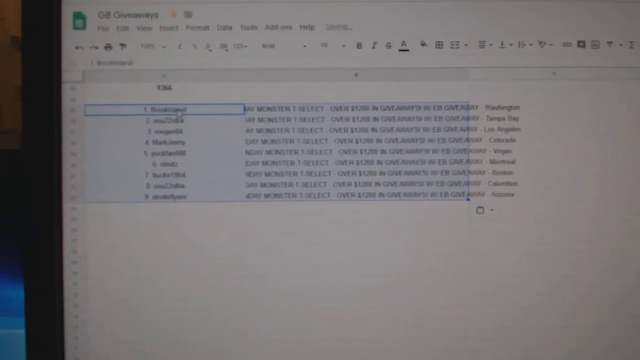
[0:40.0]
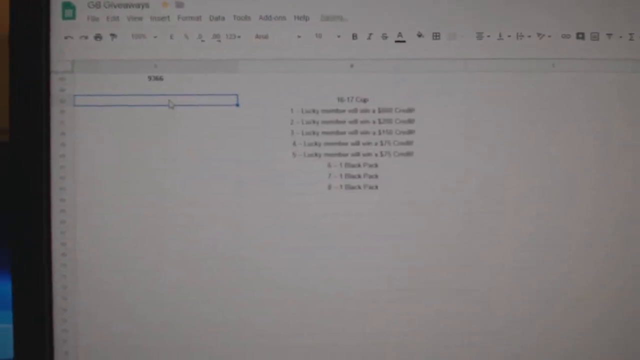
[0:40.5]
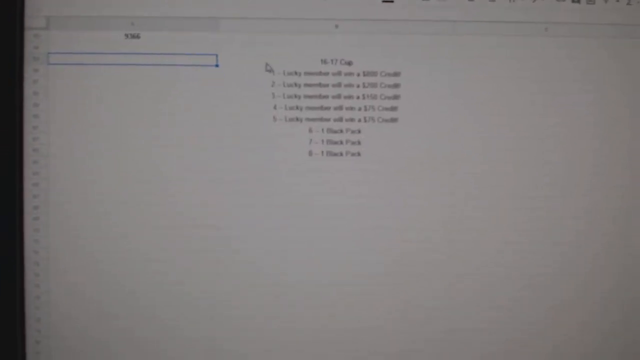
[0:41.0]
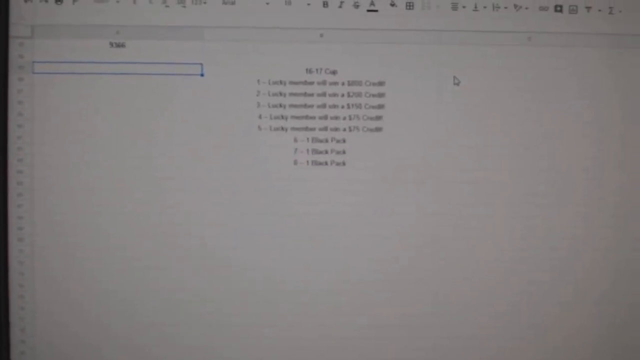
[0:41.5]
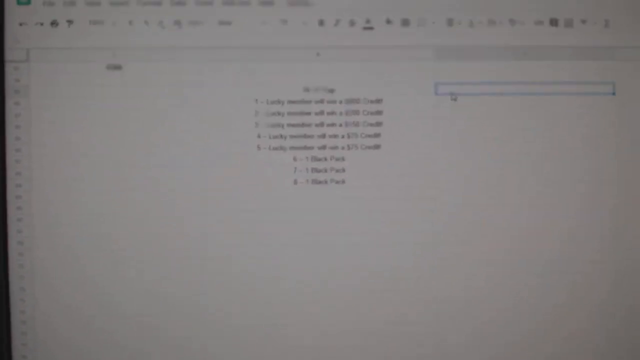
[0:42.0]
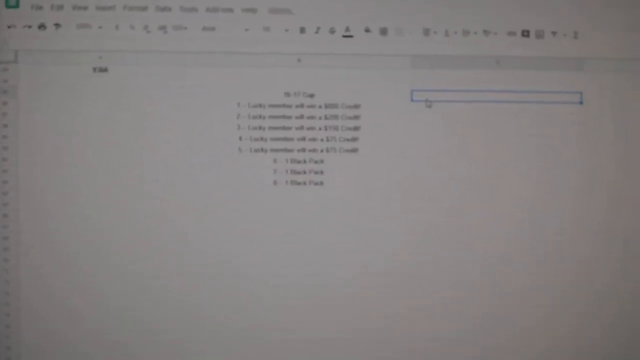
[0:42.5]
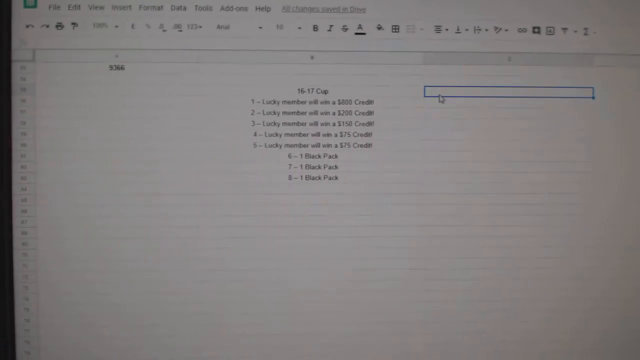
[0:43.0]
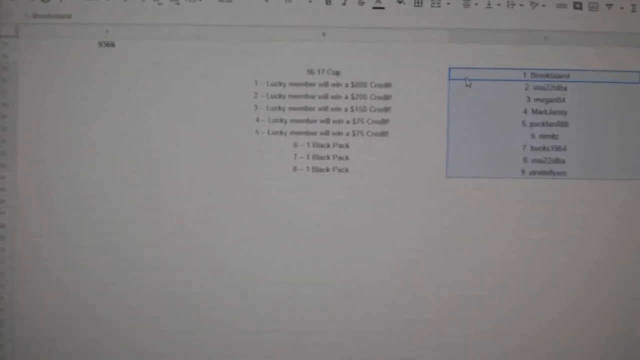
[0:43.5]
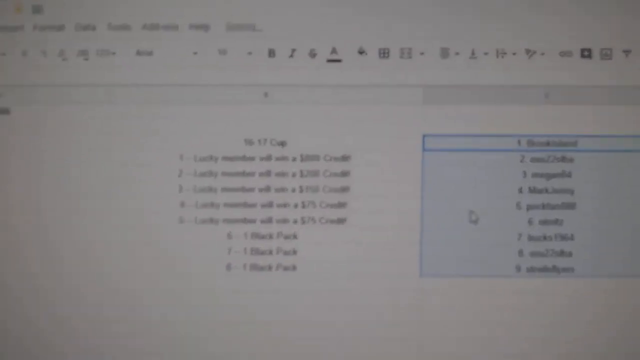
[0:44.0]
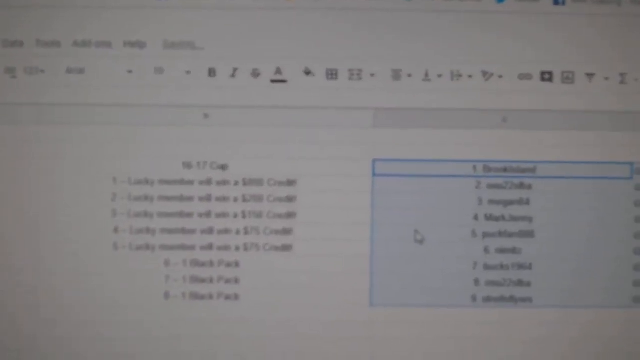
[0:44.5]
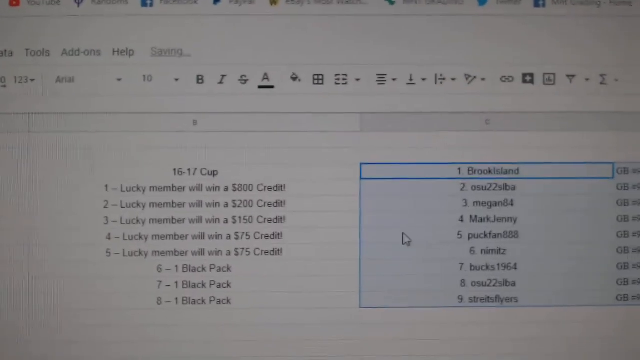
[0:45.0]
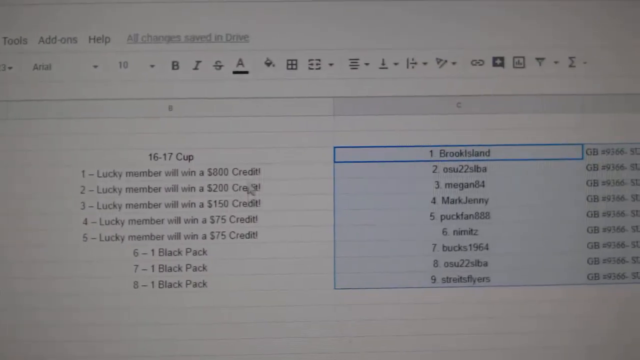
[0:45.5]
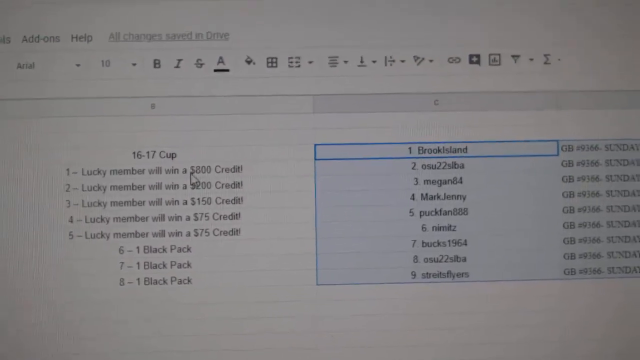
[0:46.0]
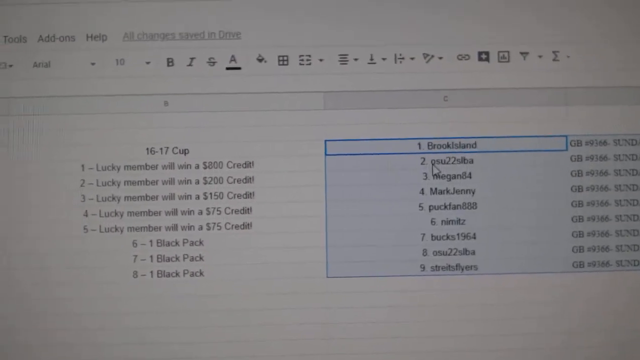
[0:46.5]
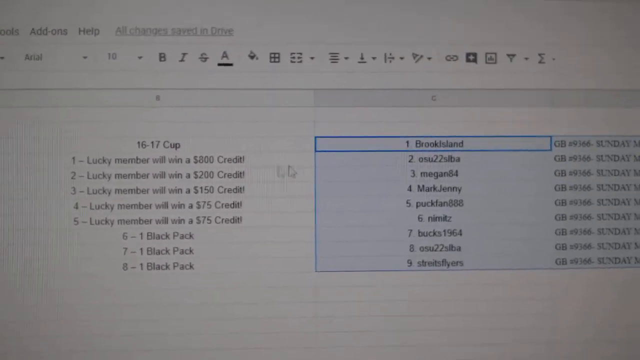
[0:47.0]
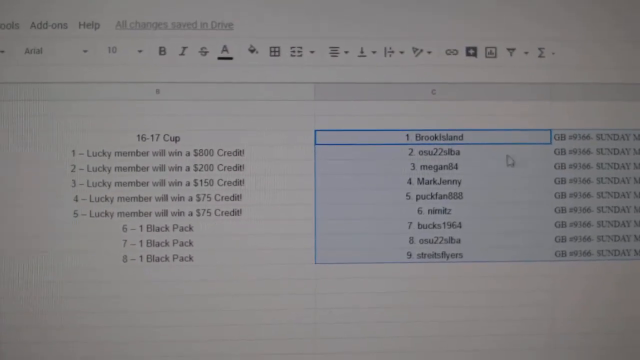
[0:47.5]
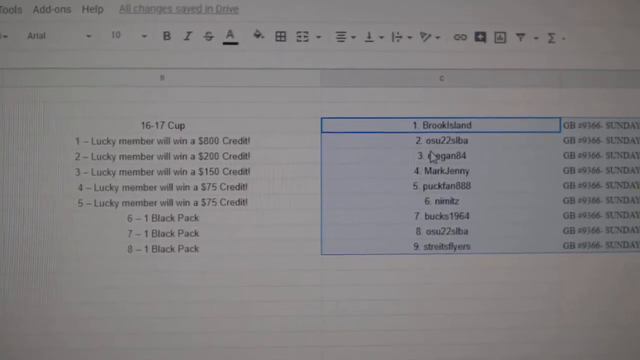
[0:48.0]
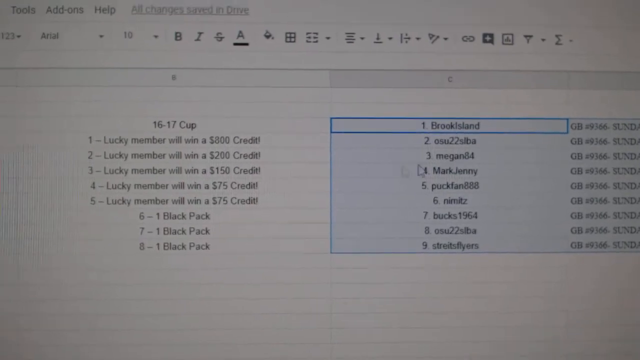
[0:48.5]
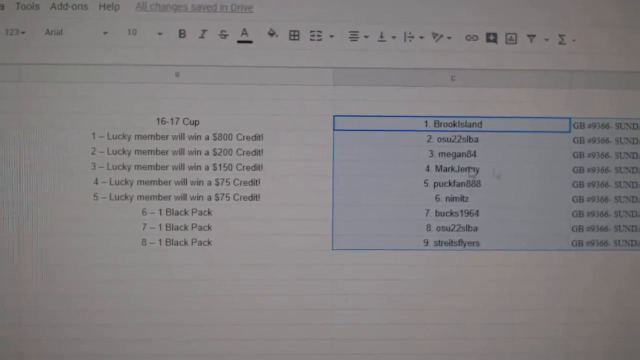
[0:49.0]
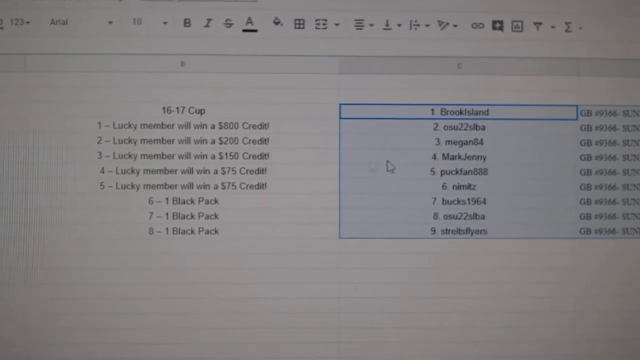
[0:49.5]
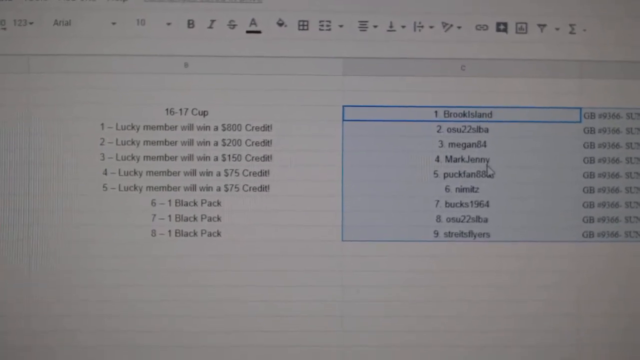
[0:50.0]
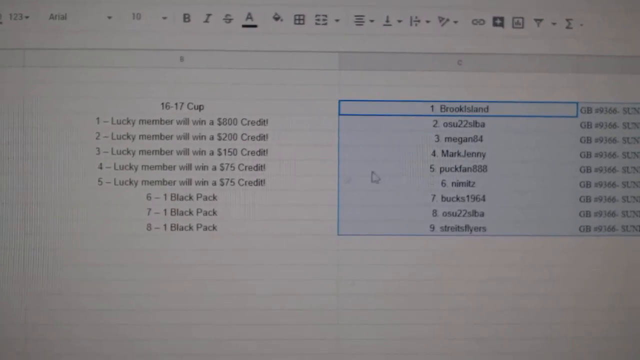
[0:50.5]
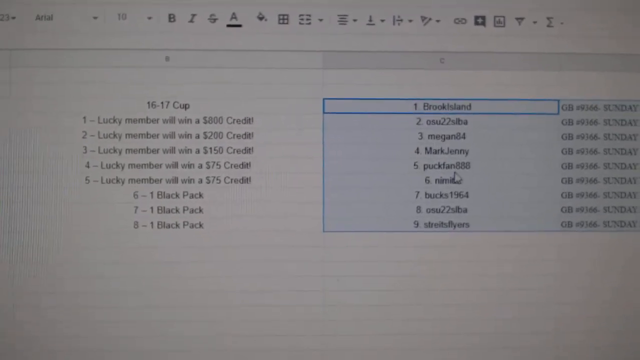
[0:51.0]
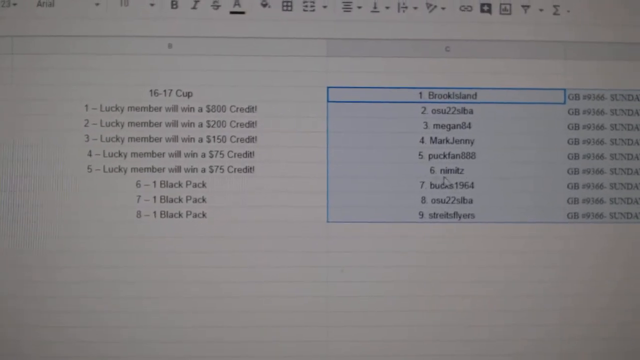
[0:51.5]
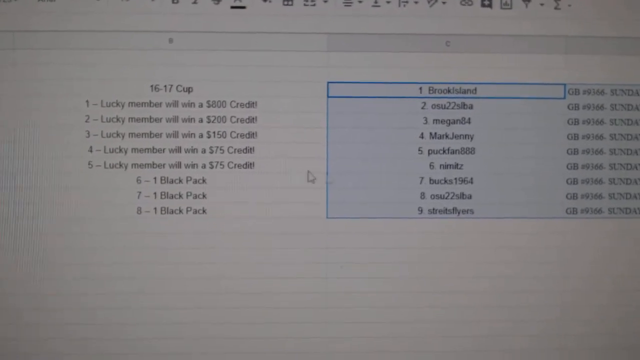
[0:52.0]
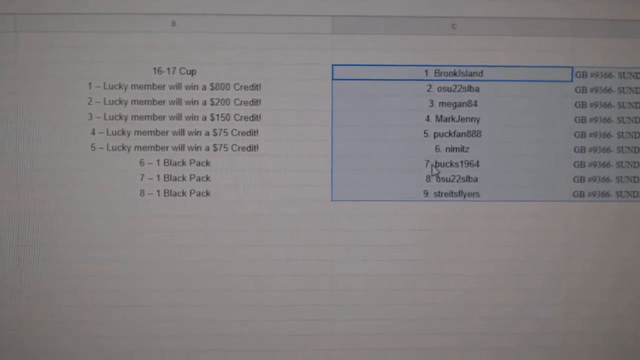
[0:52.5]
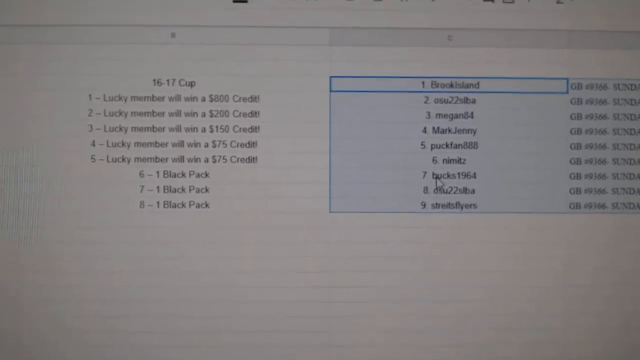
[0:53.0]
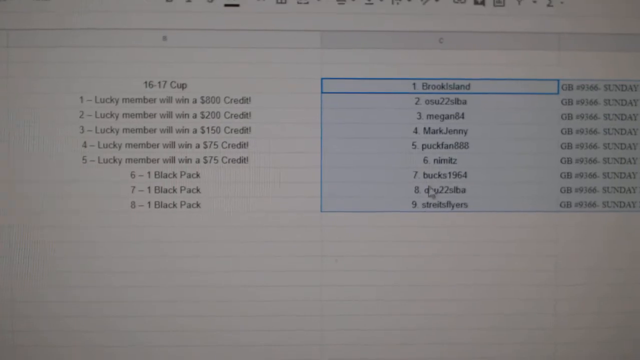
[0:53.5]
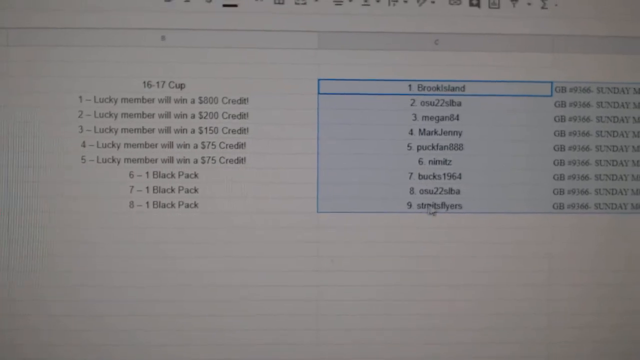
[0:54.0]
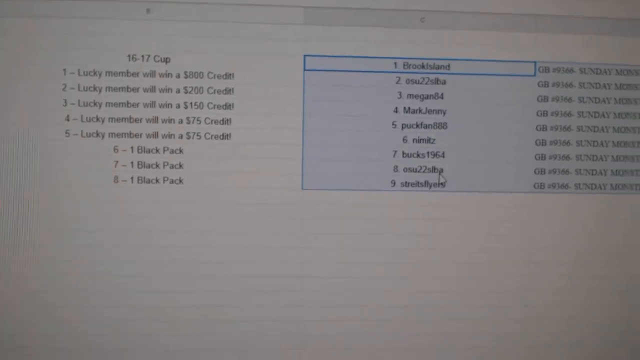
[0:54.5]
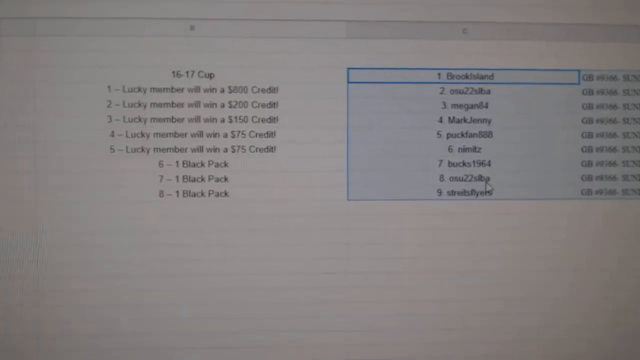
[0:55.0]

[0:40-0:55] The user undoes the paste in the Google Sheets document, moves over to the third column, and pastes there instead. The same thing happens: the number and the first value land in the selected column, and the column after it is populated with the values that came after the white space. They then move the cursor between the third and second columns, C and B. Column B is already populated with values, including "16 to 17 cup" and numbers 1 through 8 indicating prizes: for 1 through 5, lucky members get different amounts of credit ranging from $75 to $800, and for 6 to 8, they receive one black pack. Hovering back and forth between the two columns, they show that the rows next to each other indicate the winners, so the numbers 1 through 8 receive the prizes listed as 1 through 8 on the left.